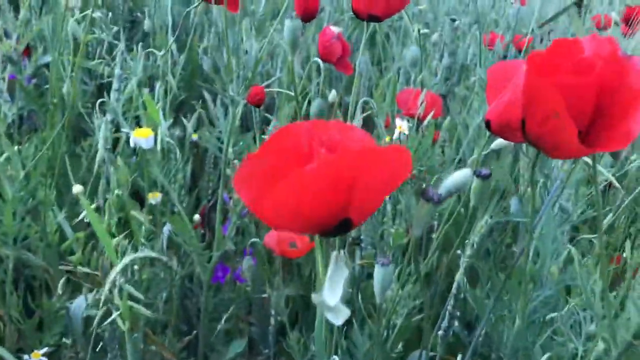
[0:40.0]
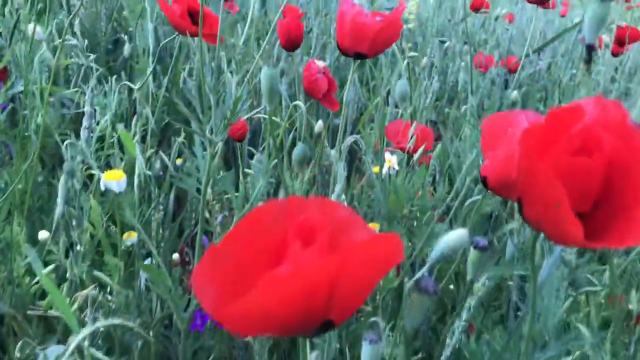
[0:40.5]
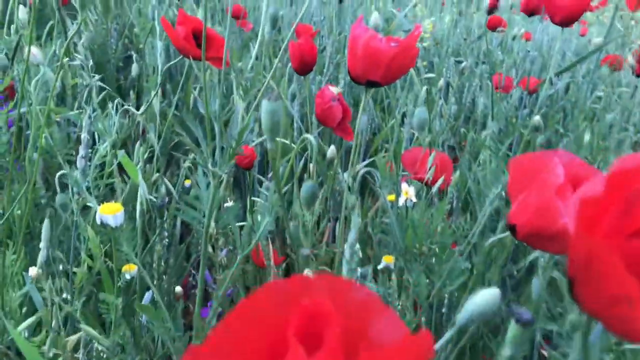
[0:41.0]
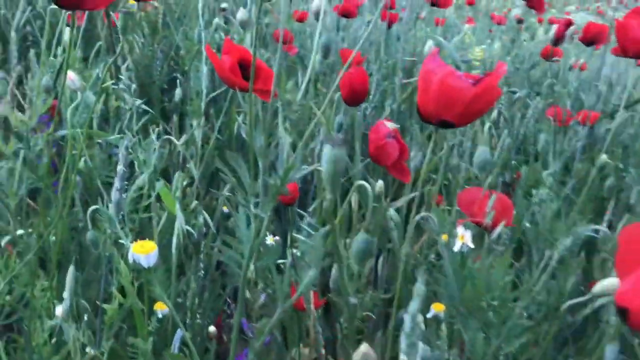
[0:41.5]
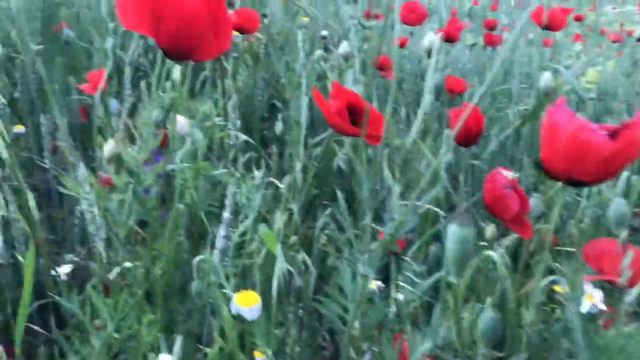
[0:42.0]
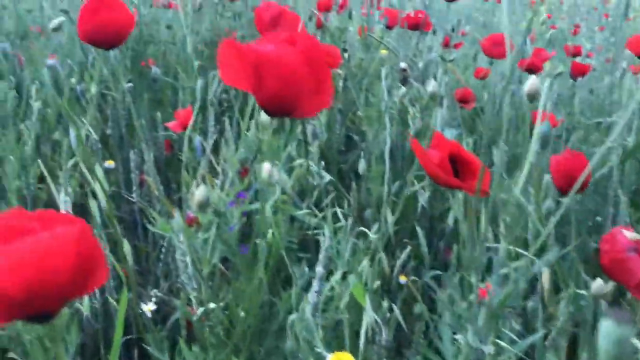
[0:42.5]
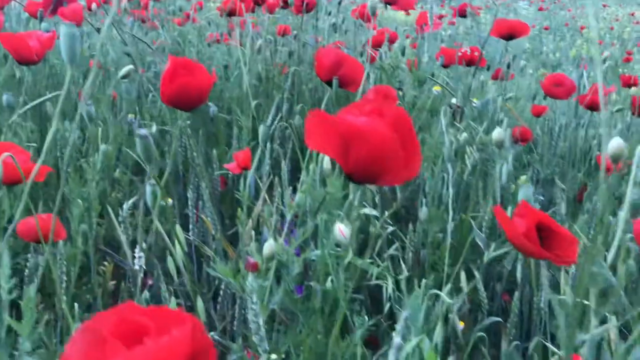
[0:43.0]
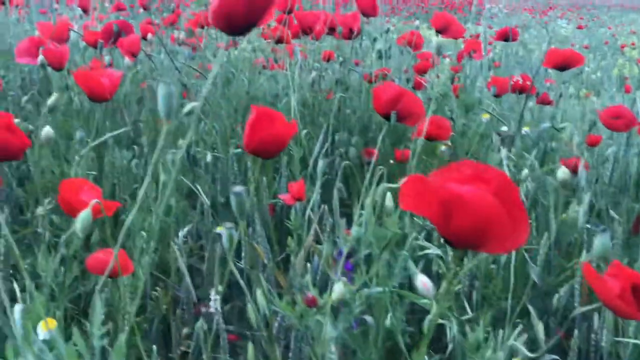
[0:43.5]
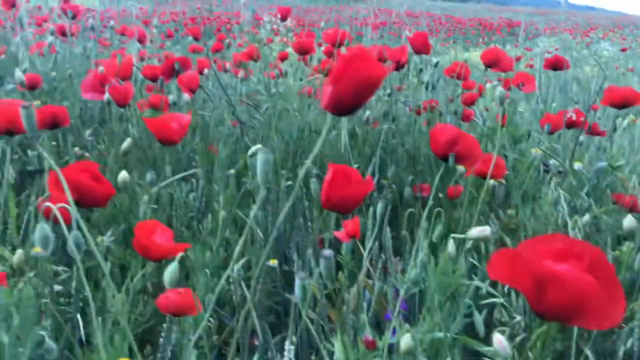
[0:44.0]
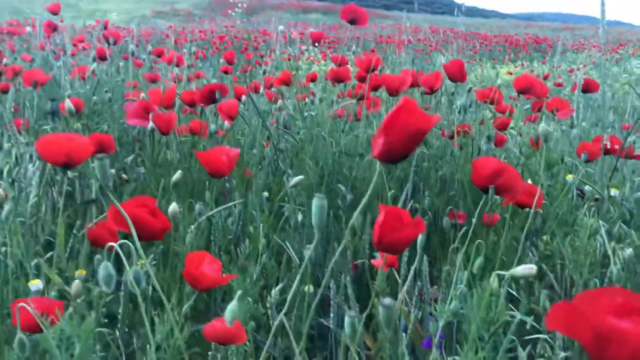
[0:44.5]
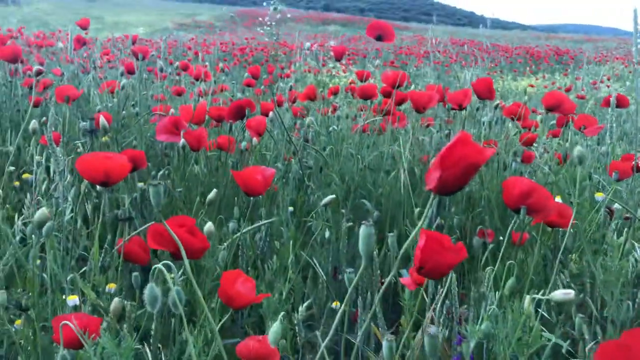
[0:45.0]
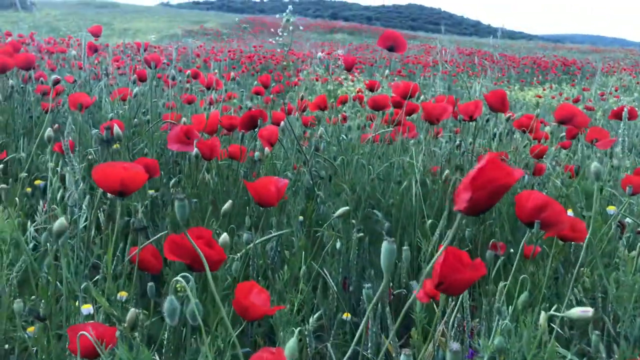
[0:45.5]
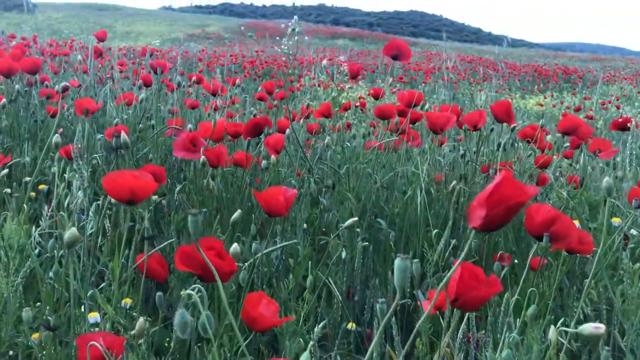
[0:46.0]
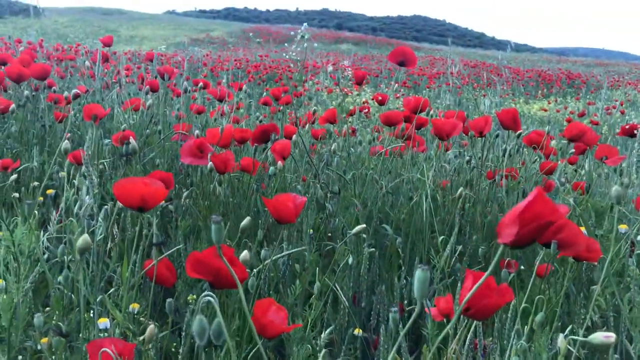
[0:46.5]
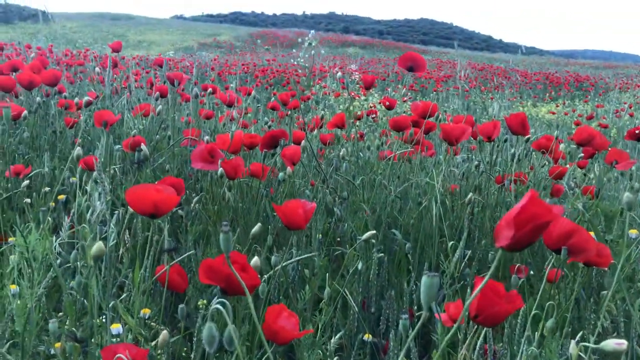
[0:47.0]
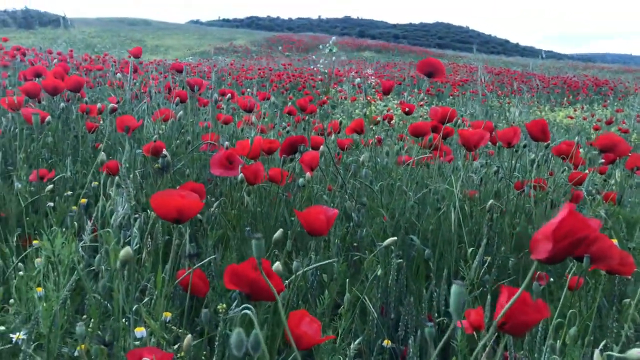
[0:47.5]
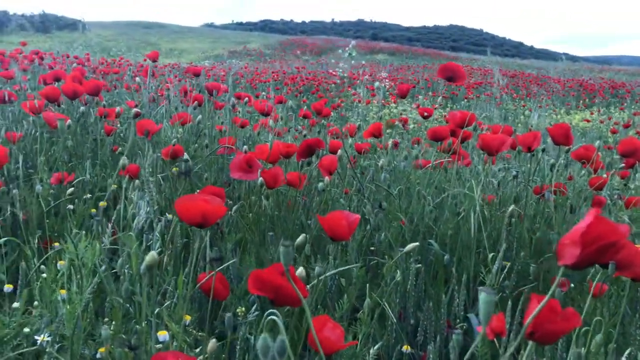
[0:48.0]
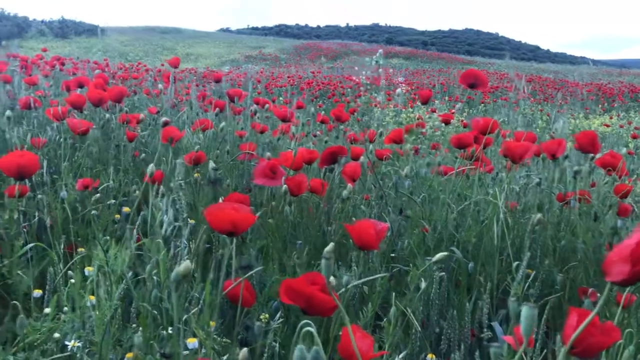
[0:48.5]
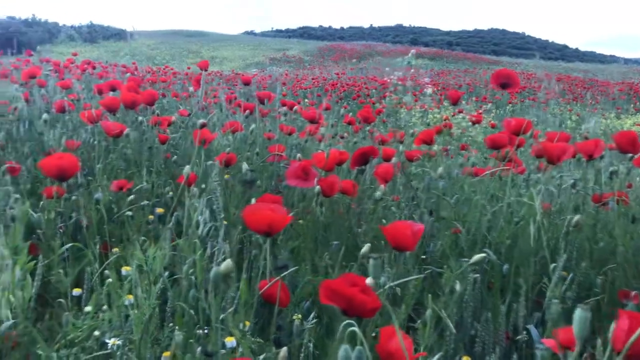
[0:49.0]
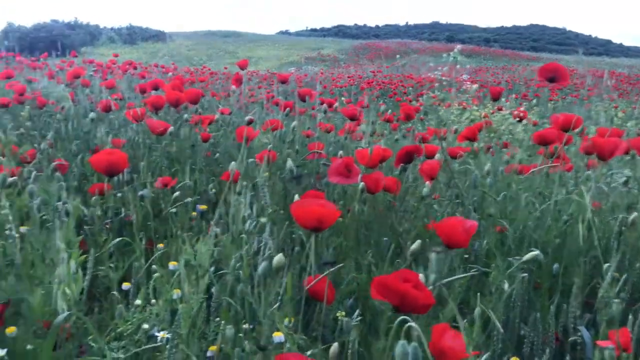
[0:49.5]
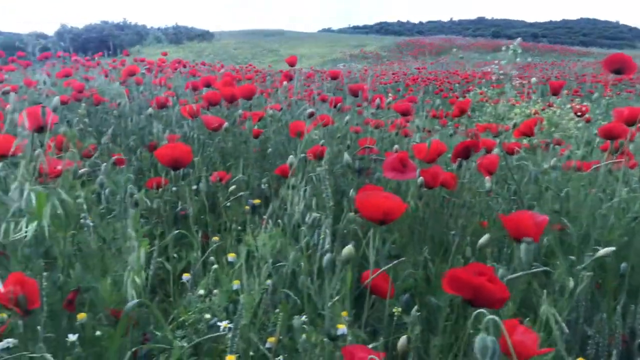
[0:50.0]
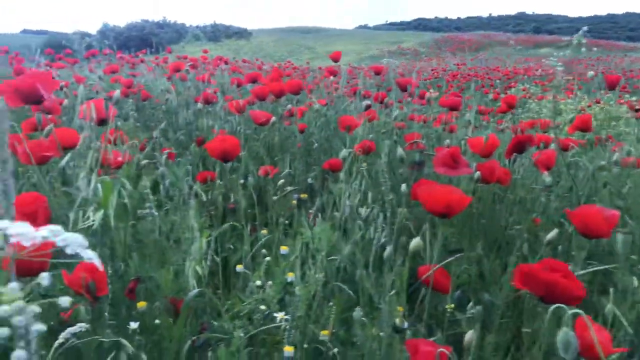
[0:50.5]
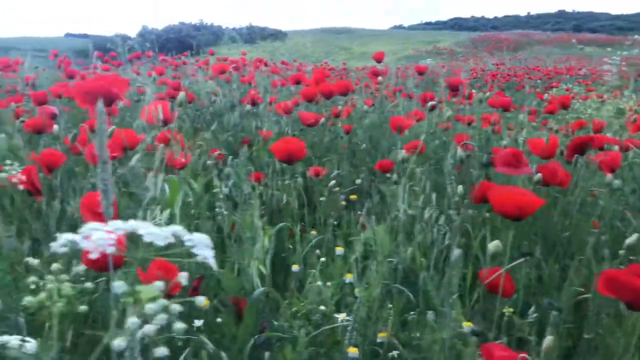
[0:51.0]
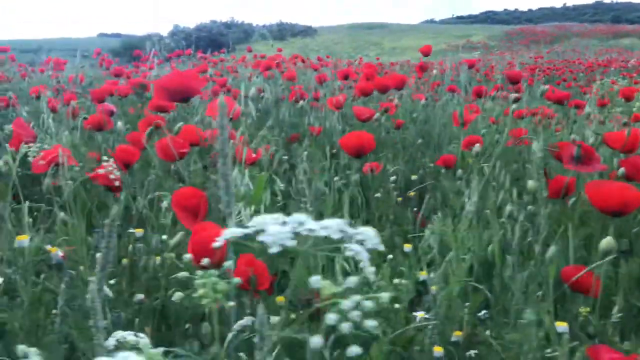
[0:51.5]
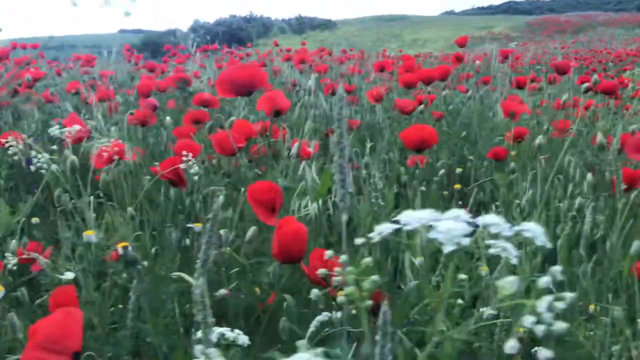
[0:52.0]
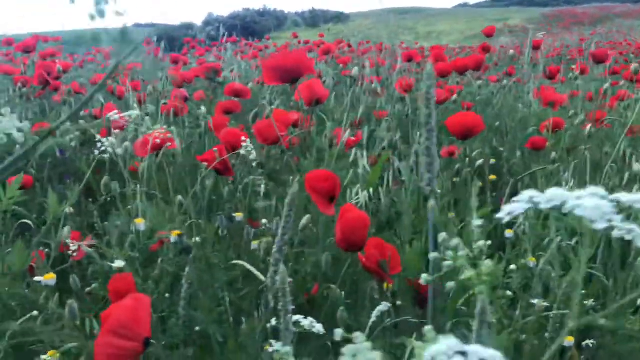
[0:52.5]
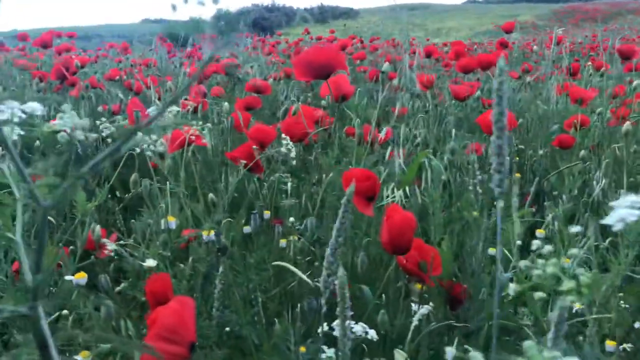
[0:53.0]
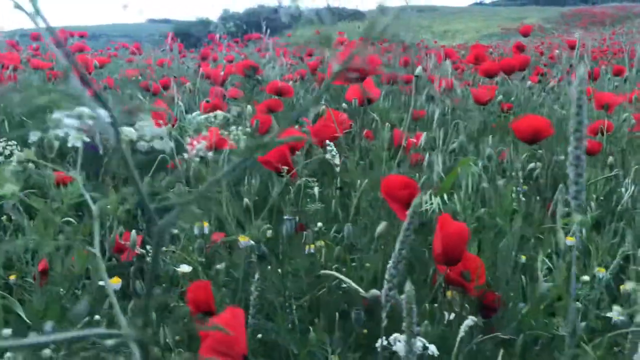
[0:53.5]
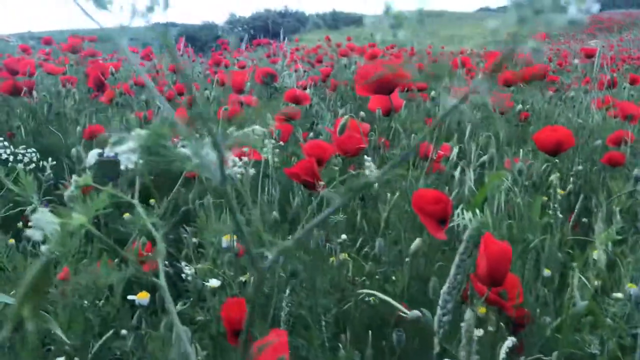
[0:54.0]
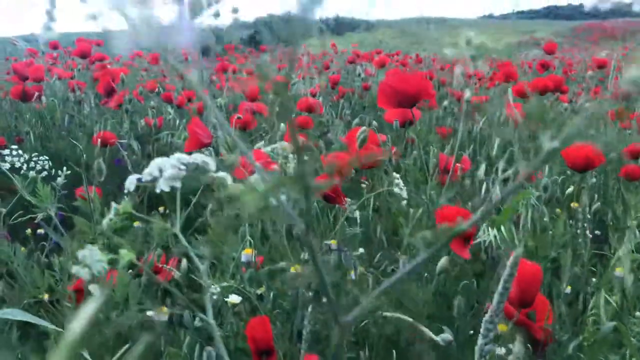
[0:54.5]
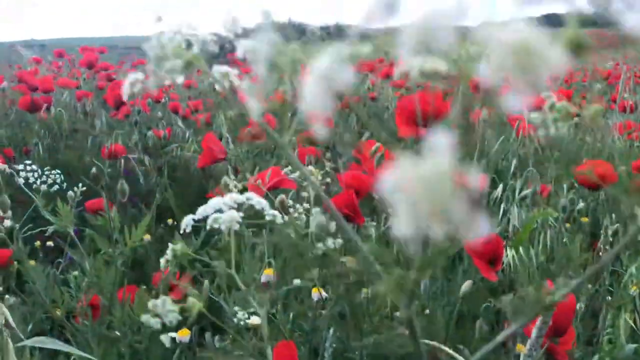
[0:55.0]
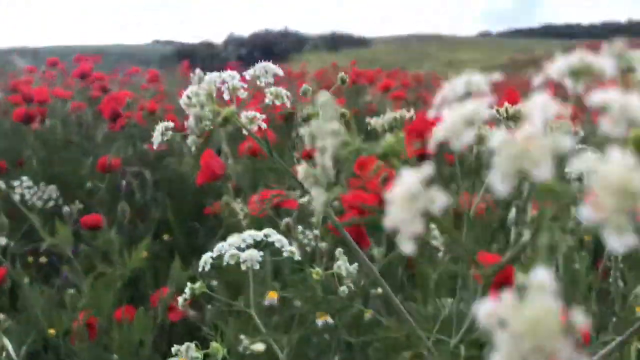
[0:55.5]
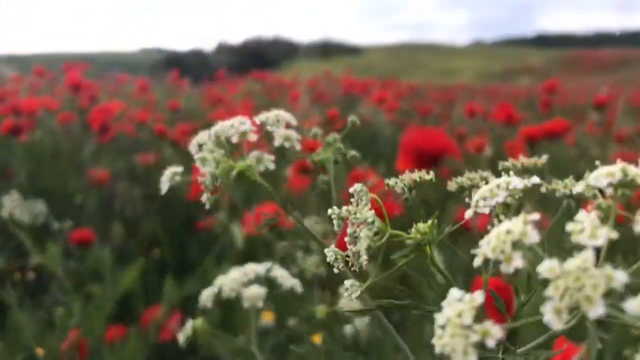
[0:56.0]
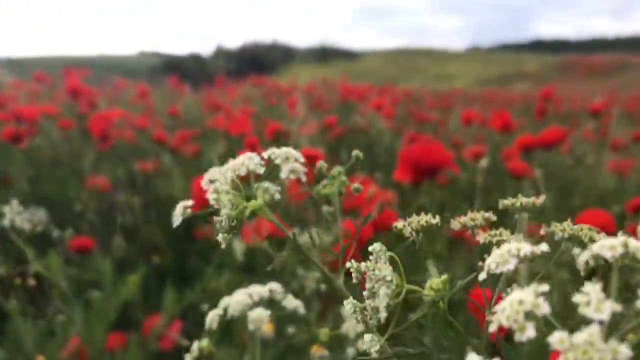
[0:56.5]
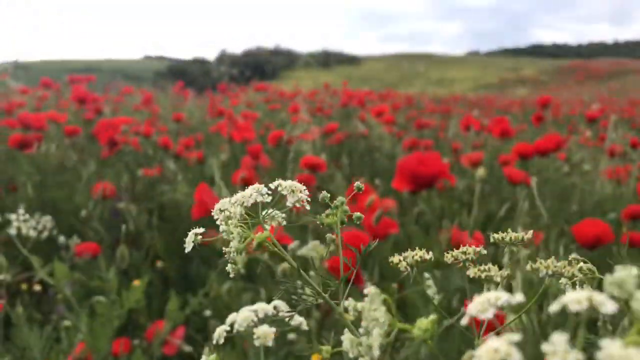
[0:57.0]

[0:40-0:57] A close-up of the poppies, much closer than before, shows a bit of a purple flower and the tiny white and yellow flower, with tall green grass growing up, probably to the person's hip. There are hundreds of thousands, maybe even millions, of poppies. A spray of white flowers that looks almost like baby's breath is mixed in, though it apparently is not baby's breath. At least four different flower types are visible, possibly more.